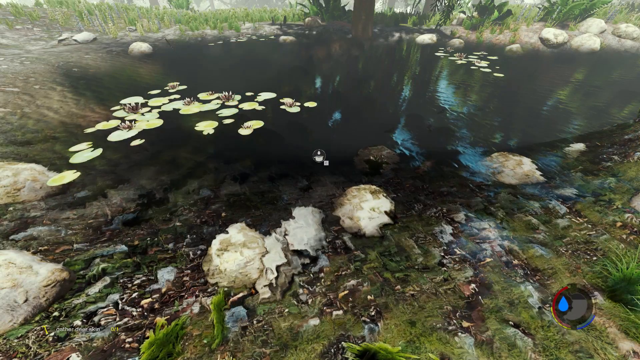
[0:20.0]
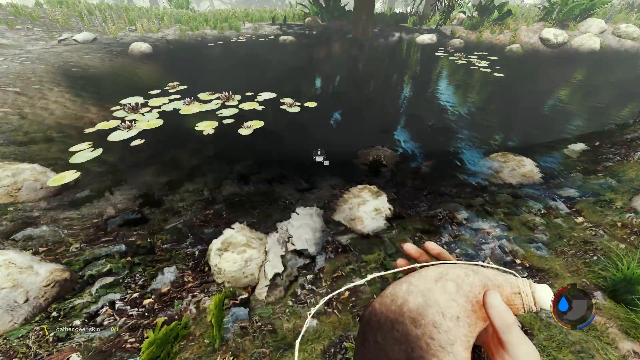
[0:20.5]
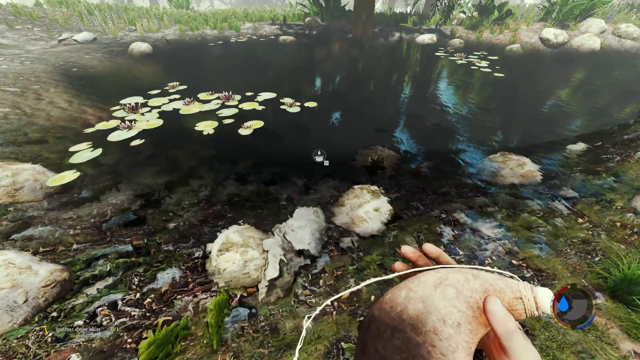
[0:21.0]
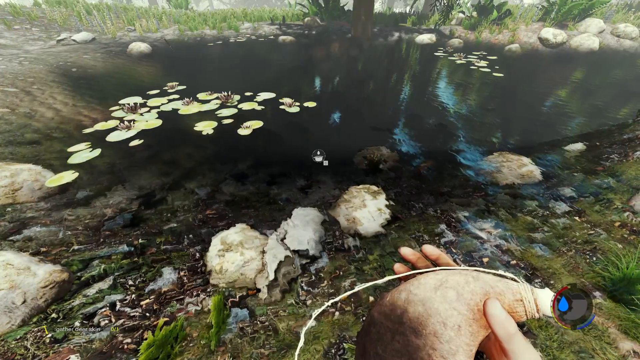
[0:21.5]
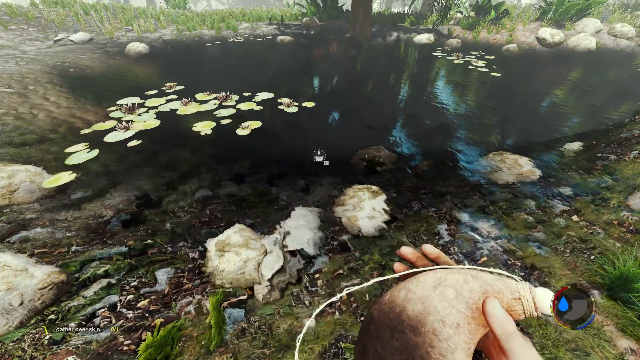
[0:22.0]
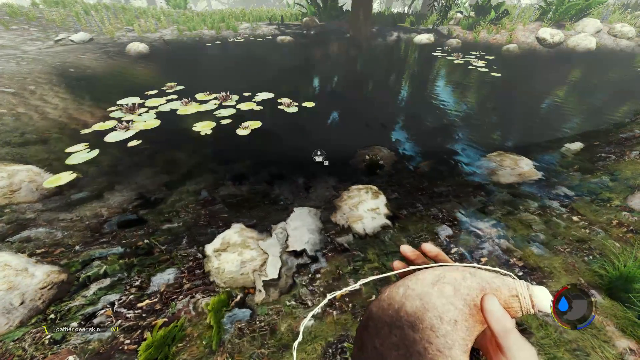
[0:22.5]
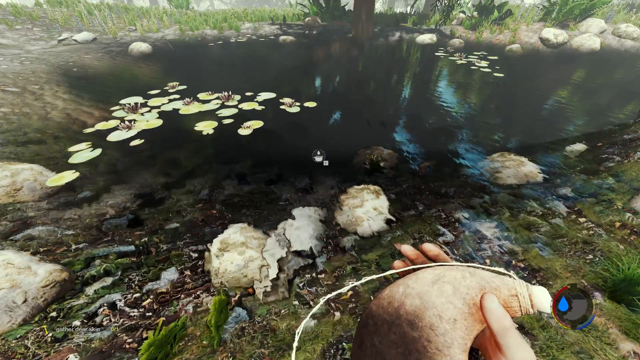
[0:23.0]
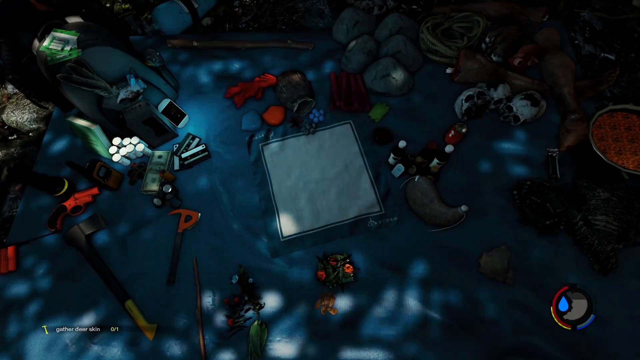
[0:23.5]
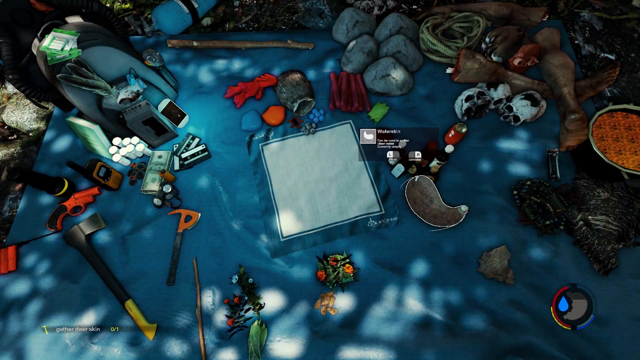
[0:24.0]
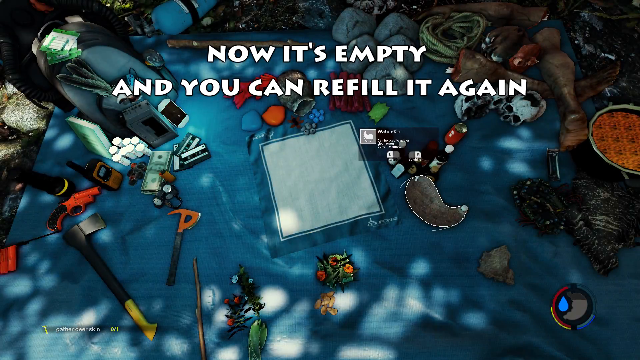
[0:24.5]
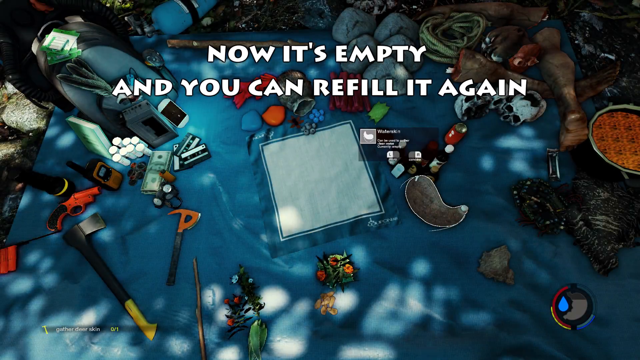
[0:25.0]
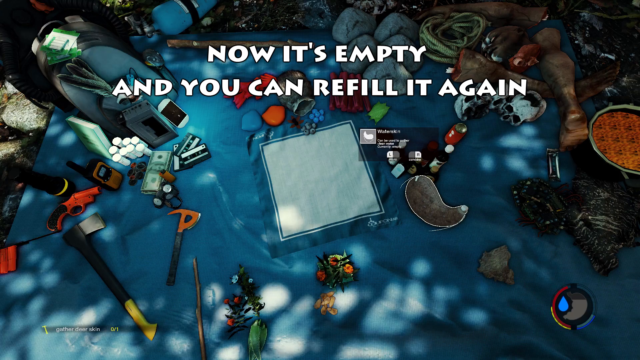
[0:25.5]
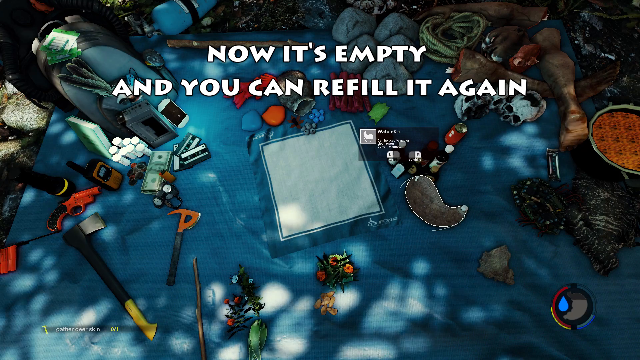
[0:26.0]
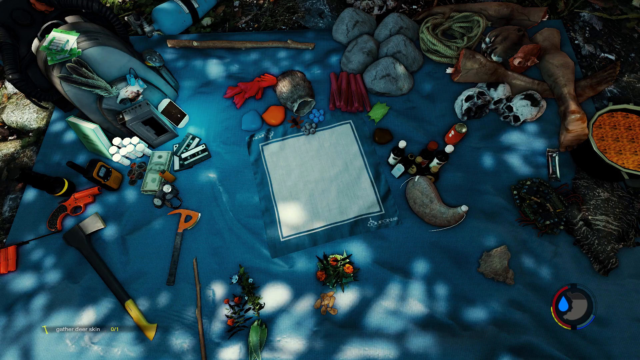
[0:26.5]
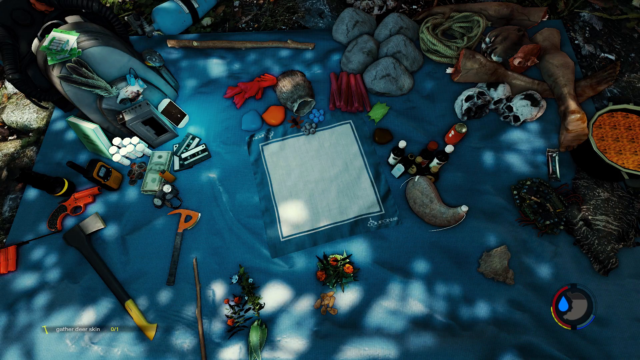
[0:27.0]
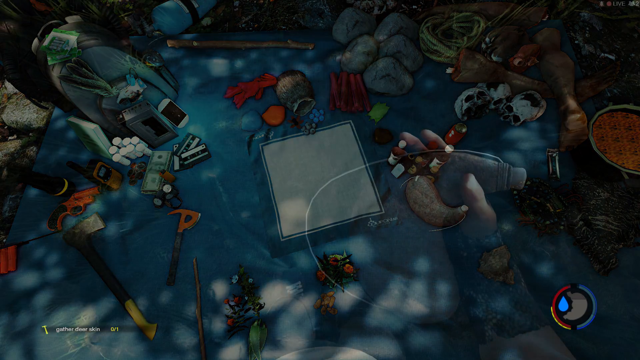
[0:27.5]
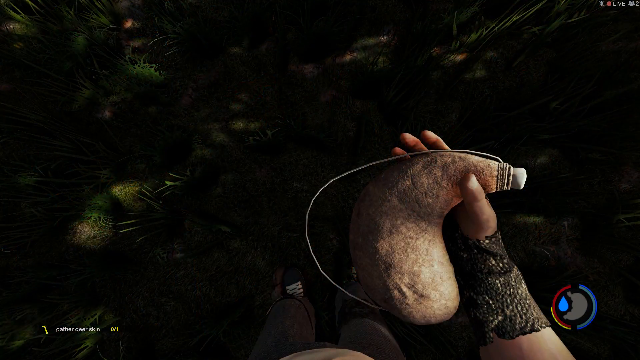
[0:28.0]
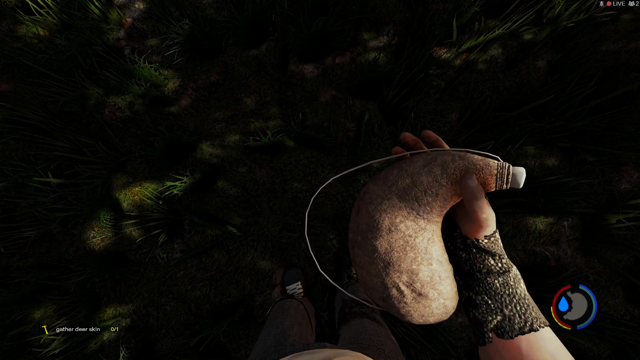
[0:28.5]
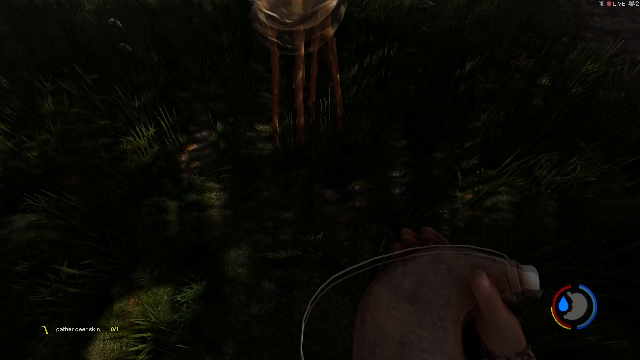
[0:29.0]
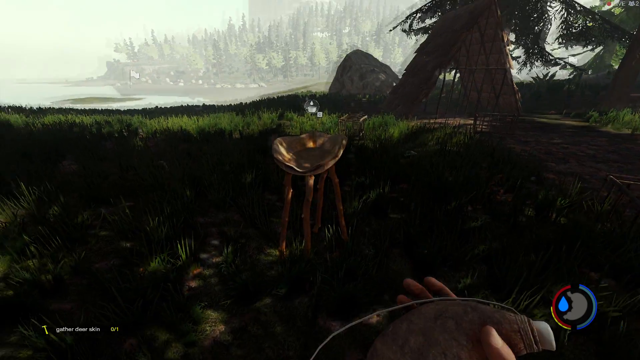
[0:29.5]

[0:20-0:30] The person in the video game seems to be drinking the water even though it is polluted. The next screen shows the drawing of the workspace with a caption reading "now it's empty and you can refill it again." The waterskin's texture is visible and looks to be made of leather. There also seems to be a bug flying around the top of the water. Ripples are on top of the water, along with some reflections from the sun. Objects on top of the table include cassette tapes, saws, a cell phone, and what seem to be bottles of medicine.